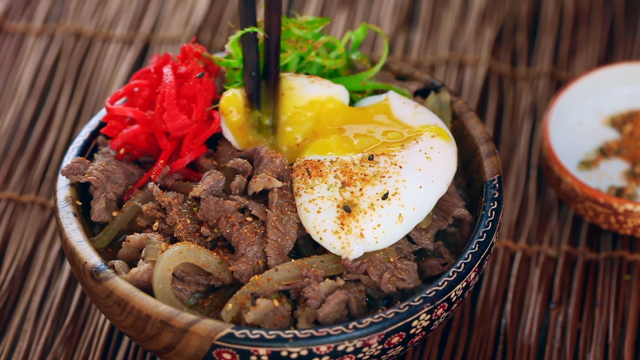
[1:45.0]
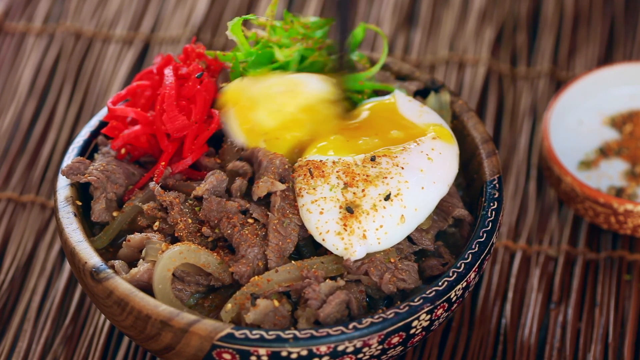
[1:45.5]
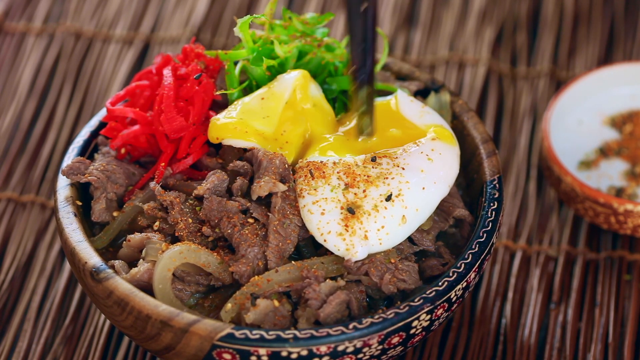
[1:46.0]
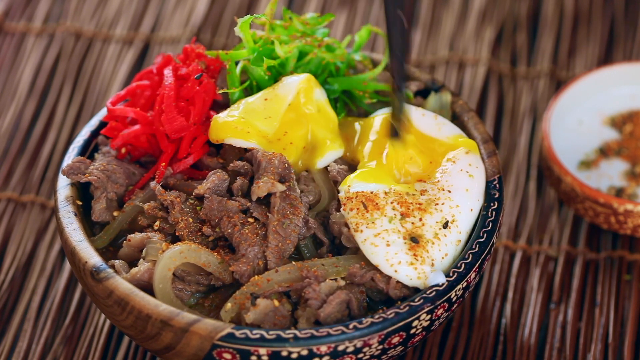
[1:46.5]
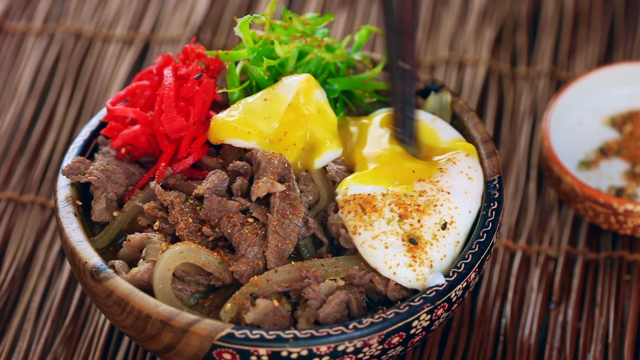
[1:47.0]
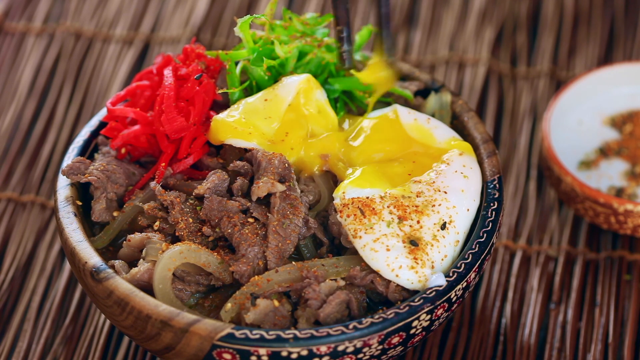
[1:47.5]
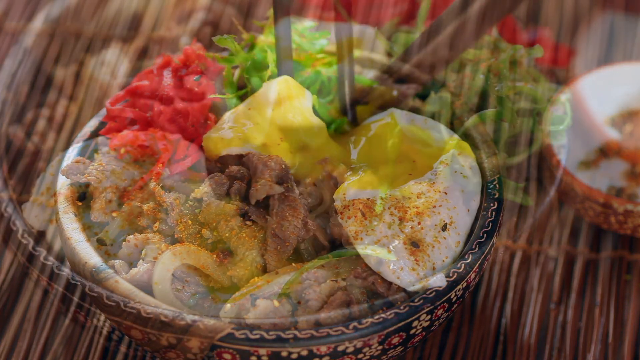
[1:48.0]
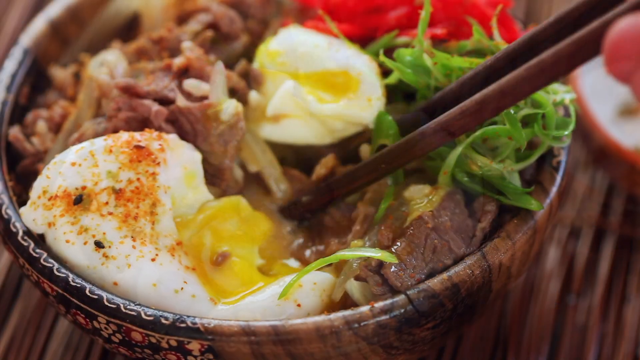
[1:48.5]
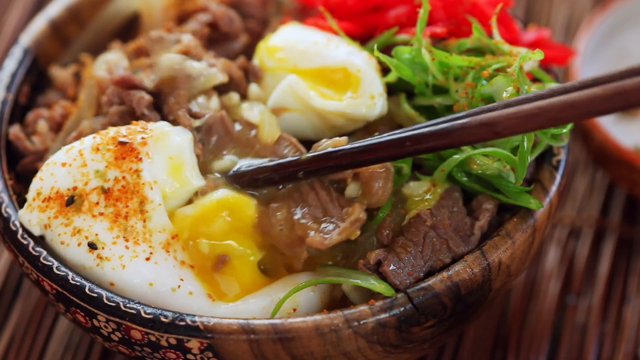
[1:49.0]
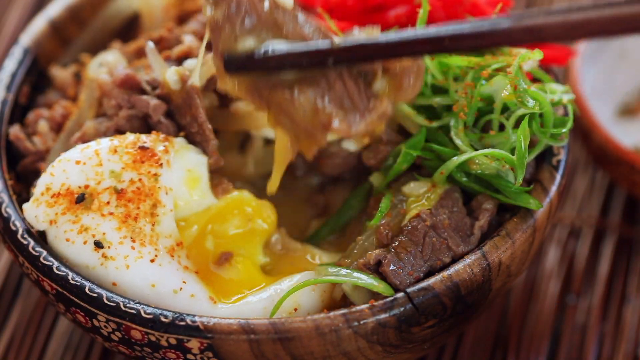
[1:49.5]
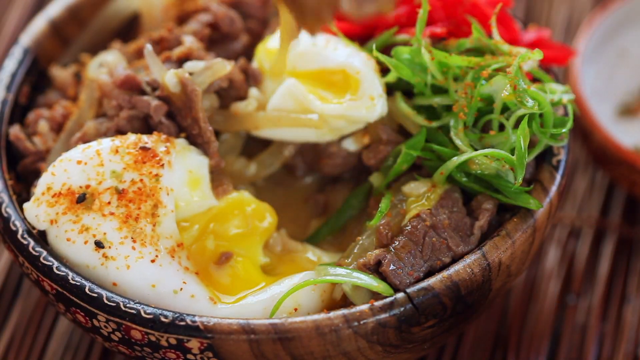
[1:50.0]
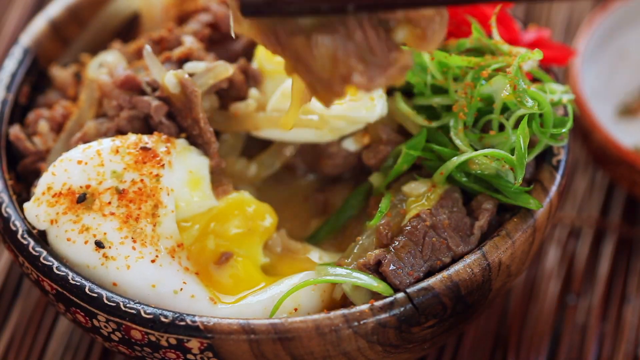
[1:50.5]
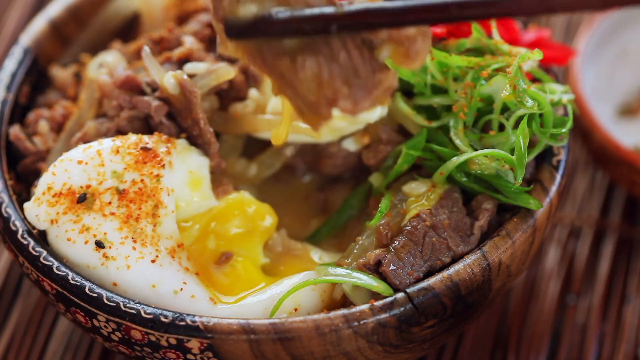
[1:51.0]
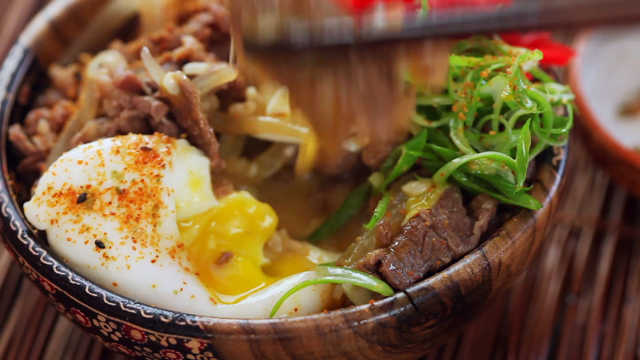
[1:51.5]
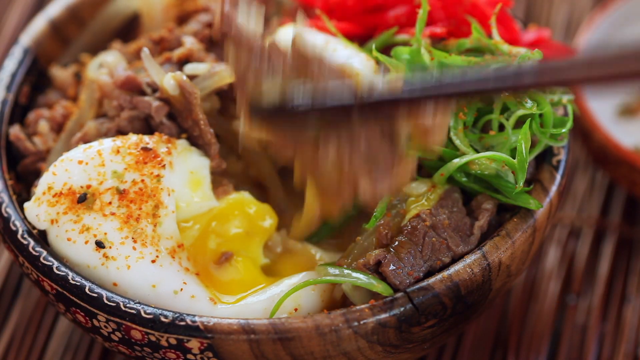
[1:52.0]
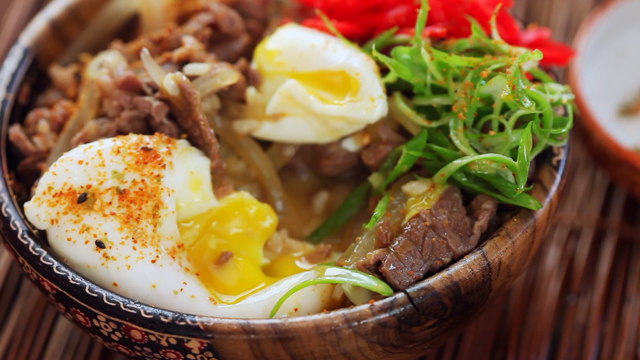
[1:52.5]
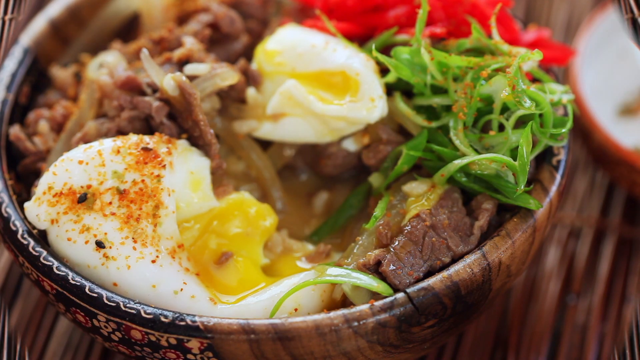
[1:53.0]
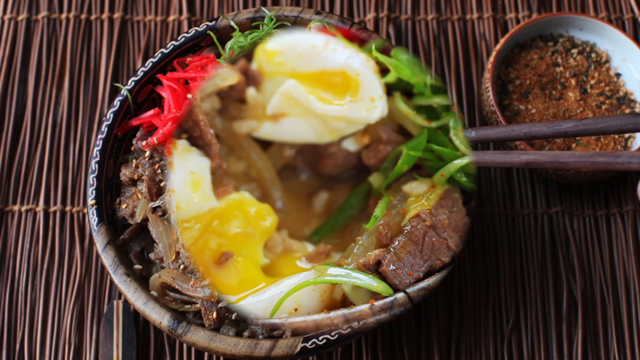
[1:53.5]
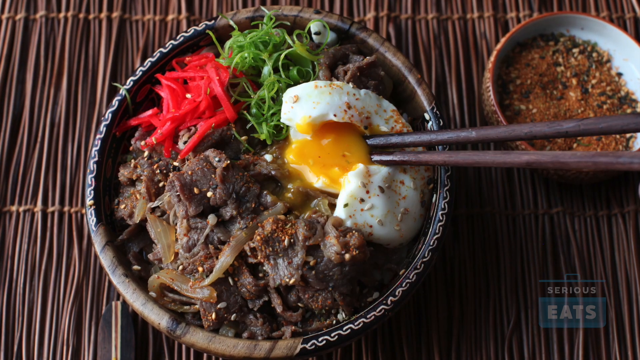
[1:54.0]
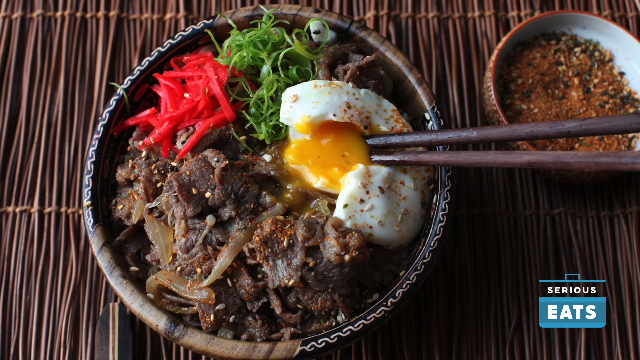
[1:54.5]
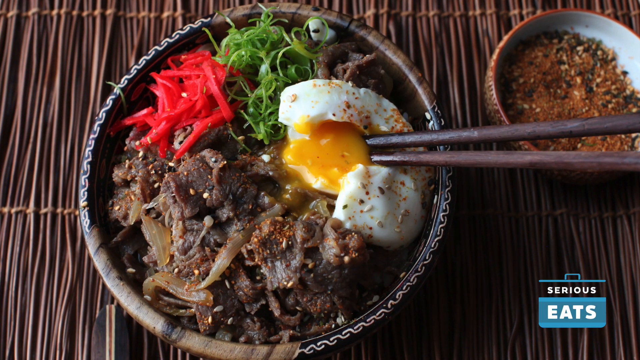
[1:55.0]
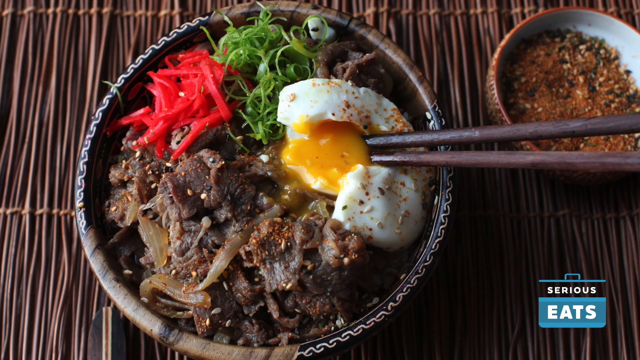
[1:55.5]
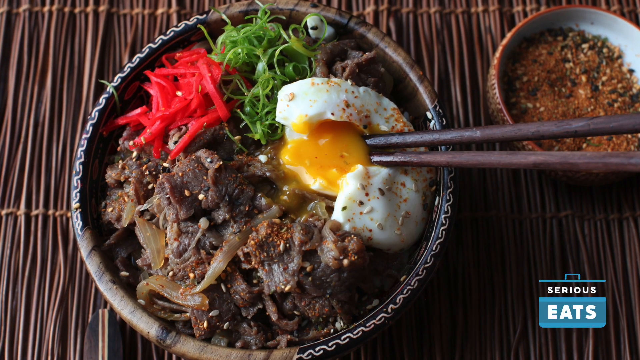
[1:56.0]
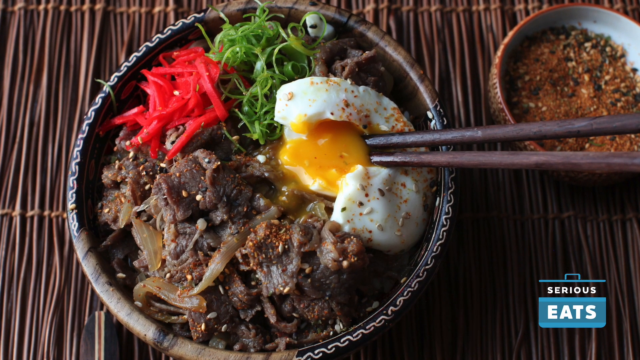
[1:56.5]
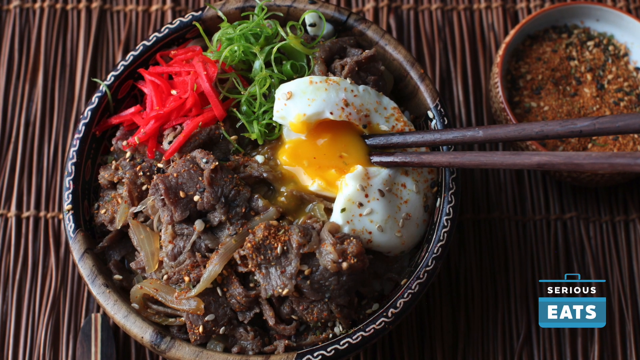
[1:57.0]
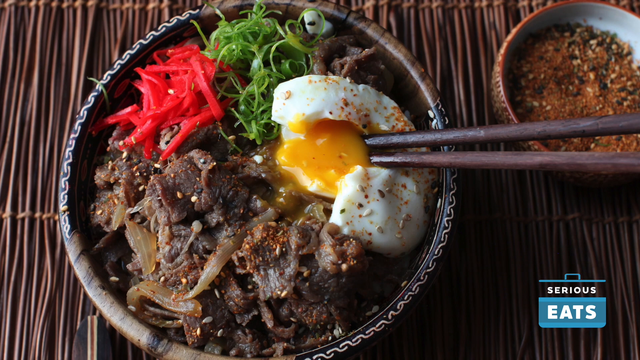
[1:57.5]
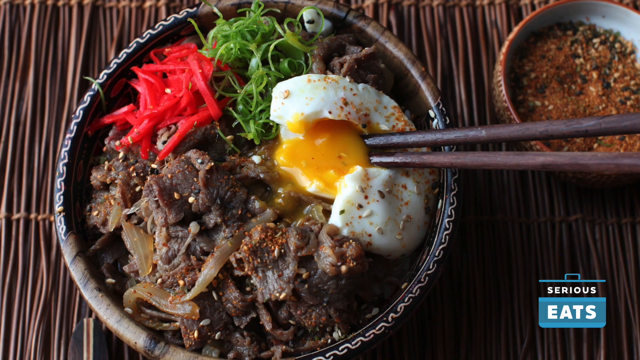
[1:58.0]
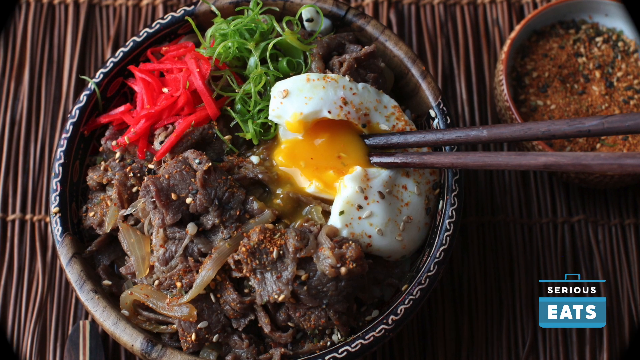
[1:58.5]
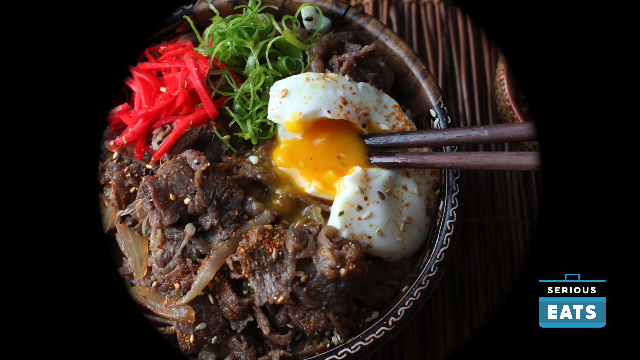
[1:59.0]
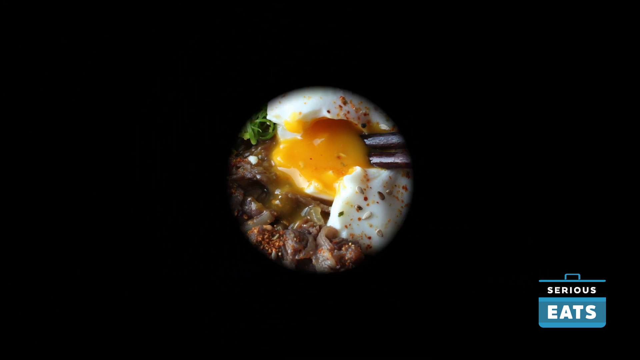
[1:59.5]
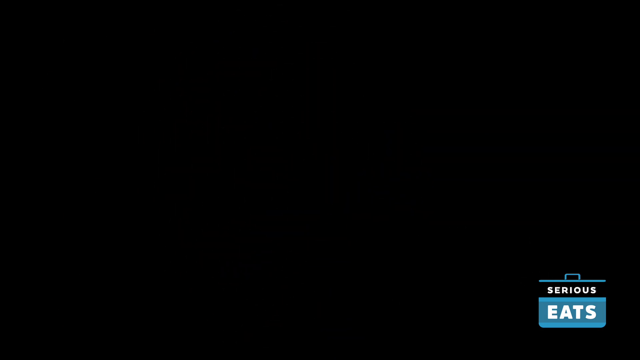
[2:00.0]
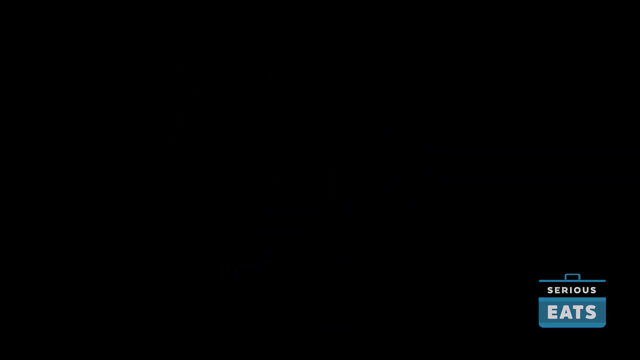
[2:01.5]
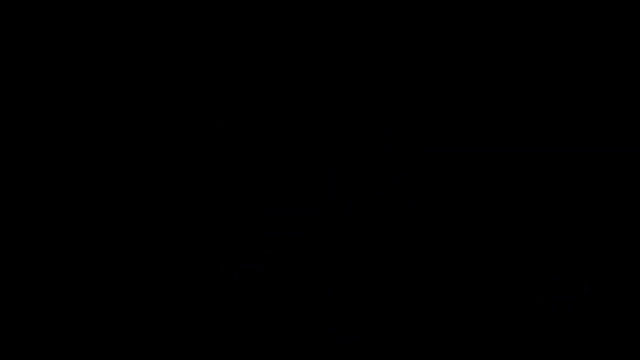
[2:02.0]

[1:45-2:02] The poached egg is swirled around the bowl with the chopsticks. It cuts to the chopsticks picking up a very thin slice of beef dipped in the egg yolk. A transition like a microscope zooming out, with blackness, leads to a still image of the finished bowl with the beef and the opened egg, styled artistically, the wooden chopsticks lying on the very edge of the bowl. The video ends with a fade to black in which a big circle of the image shrinks into a very small circle until the screen is all black.